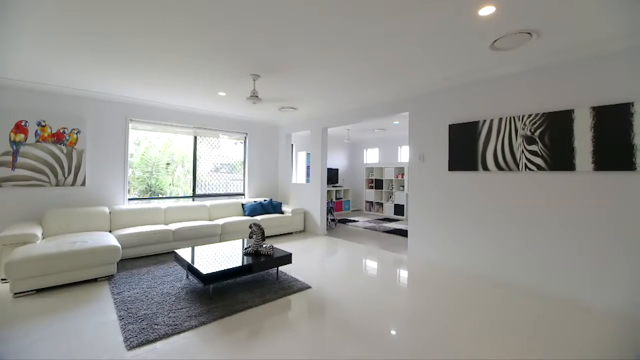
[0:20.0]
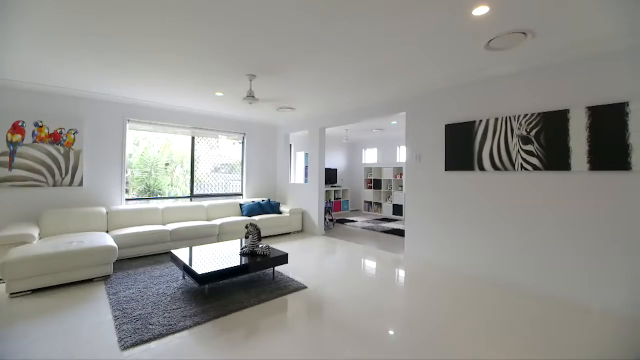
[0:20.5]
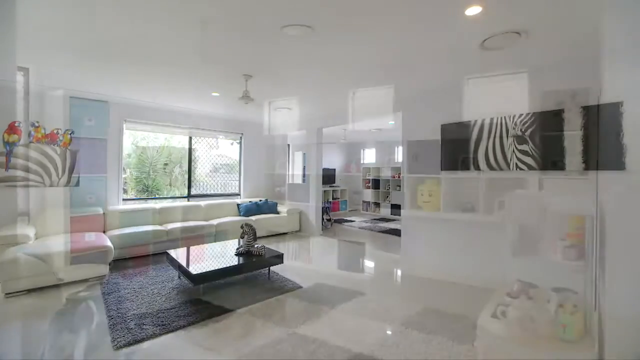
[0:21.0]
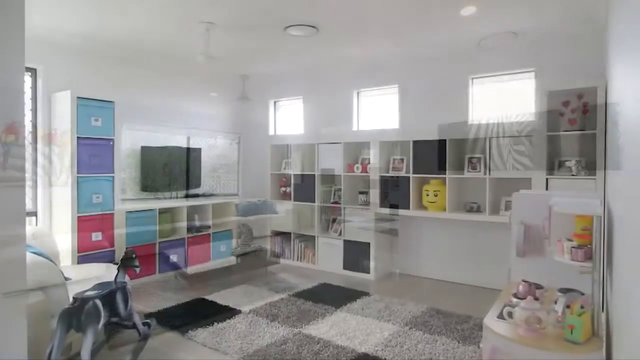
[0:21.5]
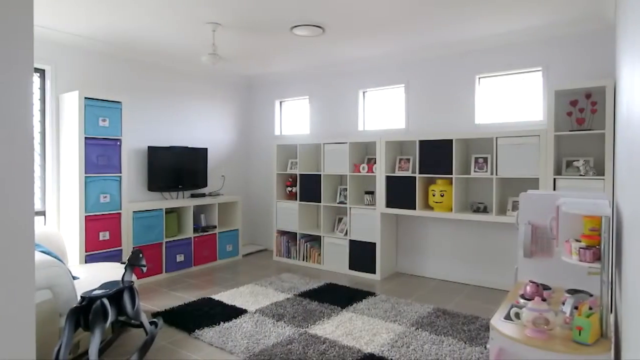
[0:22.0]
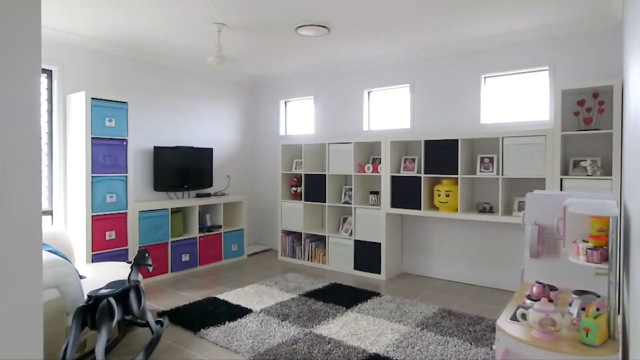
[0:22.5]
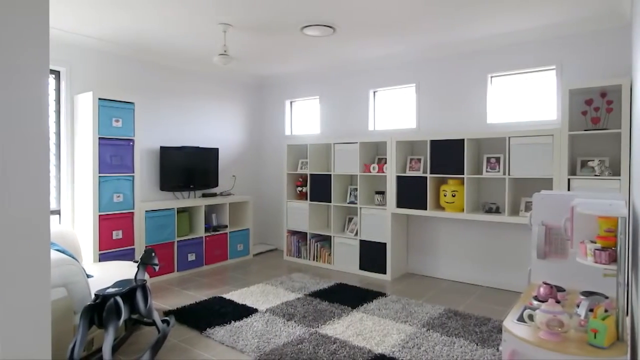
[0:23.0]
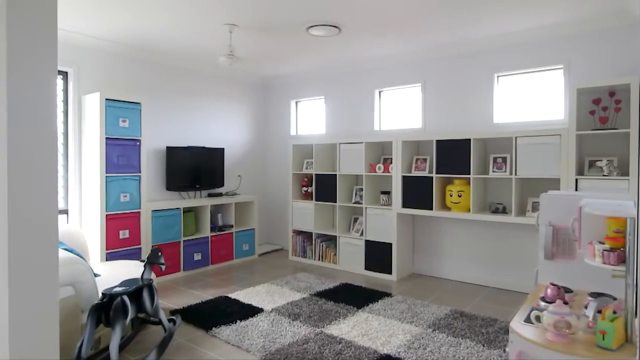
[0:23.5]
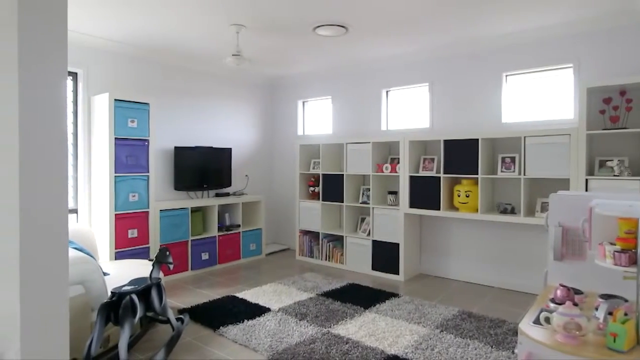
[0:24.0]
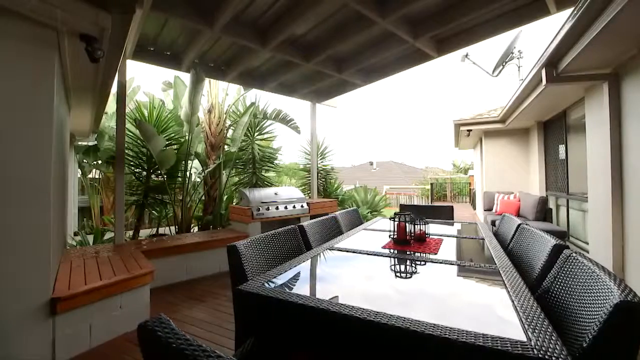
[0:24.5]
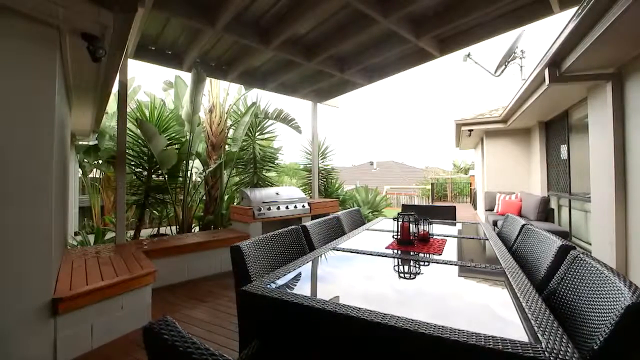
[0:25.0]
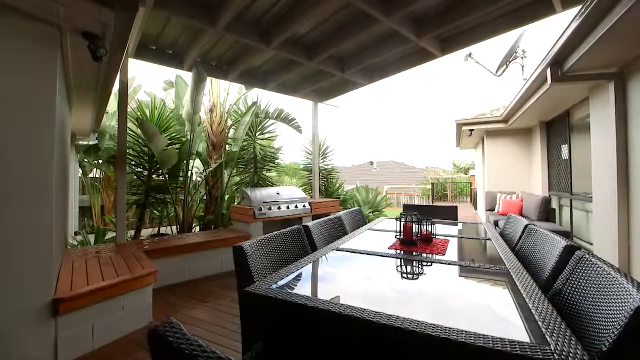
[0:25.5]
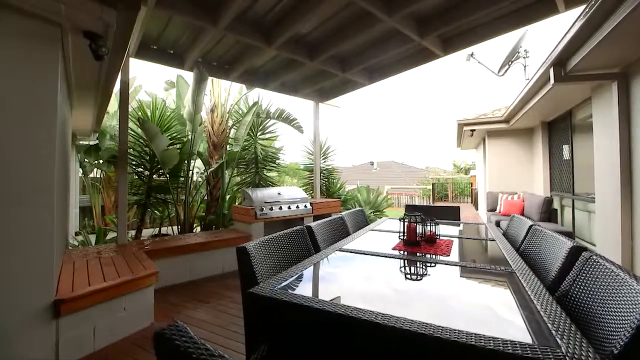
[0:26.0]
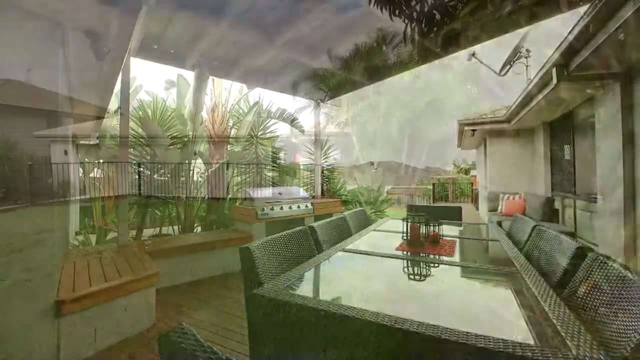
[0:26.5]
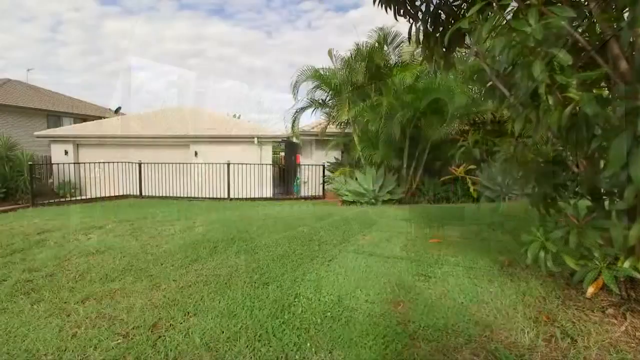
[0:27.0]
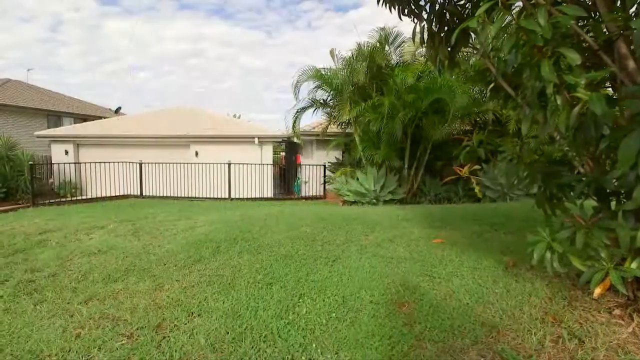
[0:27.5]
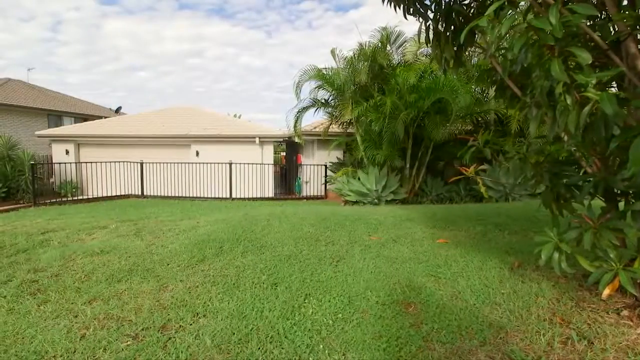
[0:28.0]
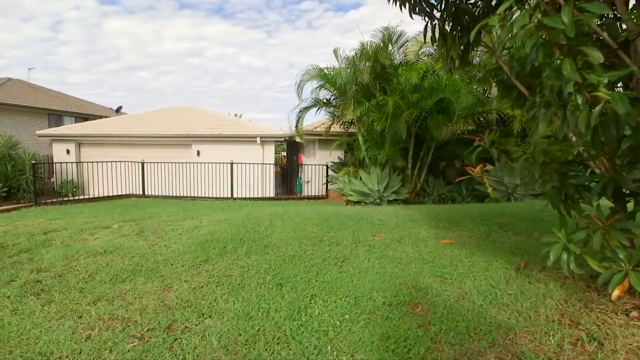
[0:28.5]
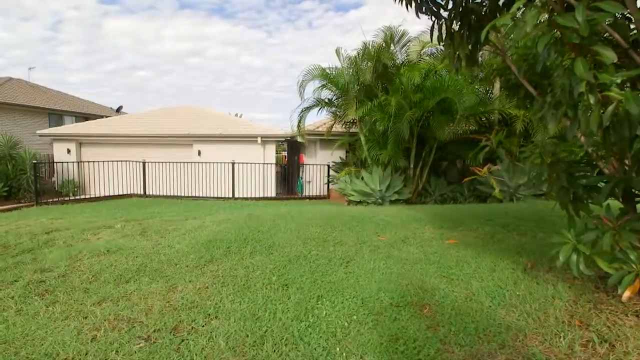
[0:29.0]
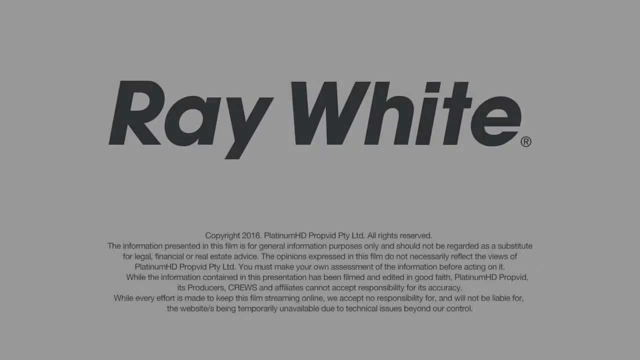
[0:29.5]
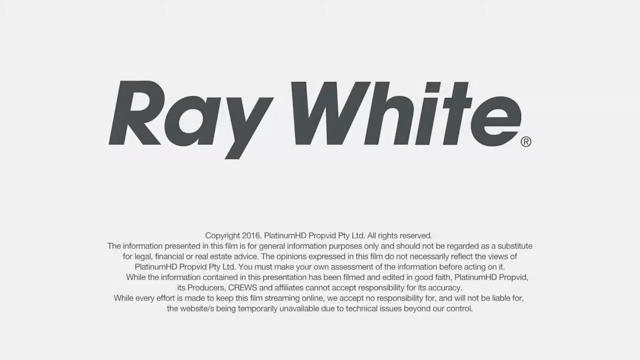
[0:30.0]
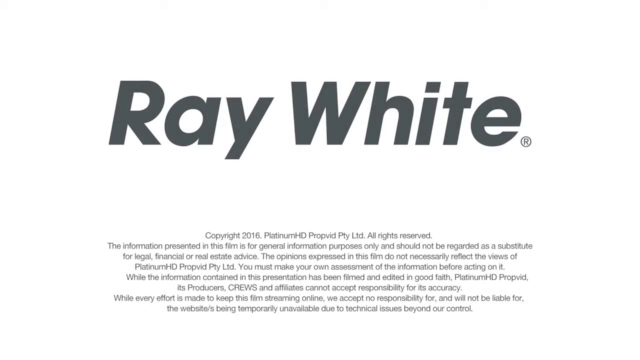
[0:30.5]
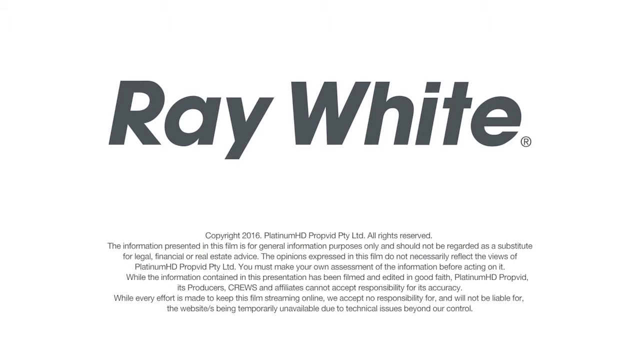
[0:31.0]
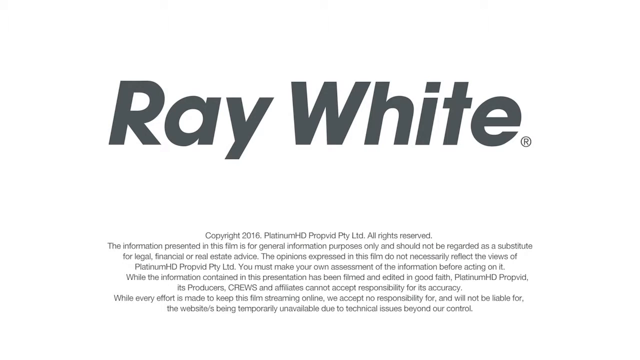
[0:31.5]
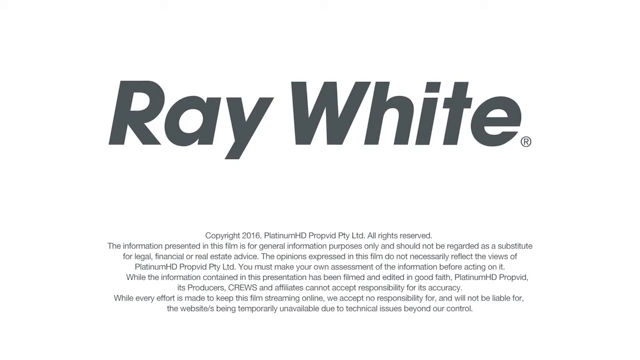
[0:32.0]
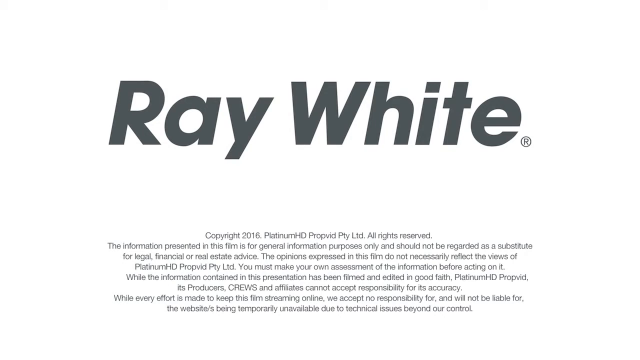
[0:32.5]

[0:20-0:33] The living room of the house is decorated mainly in black and white, with a white ceiling, walls and floor. A large white five-seat settee has some turquoise blue cushions to one side. There is a large grey rug with a coffee table placed to one side, and on the coffee table is a little statue of a zebra. A canvas of a zebra hangs on one wall, and on another wall is a canvas of some very colourful parrots. The view then changes to another room that could possibly be a playroom. Off to one side there appears to be a door; little of it is visible, but some natural light comes through, so it probably leads outside. Three small windows are towards the top of one of the walls. The room is very white, with lots of Ikea Kallax units holding brightly coloured boxes in pink, purple, blue, black and white, along with what looks like books and toys, a giant lego head, some photographs, and a rocking horse.